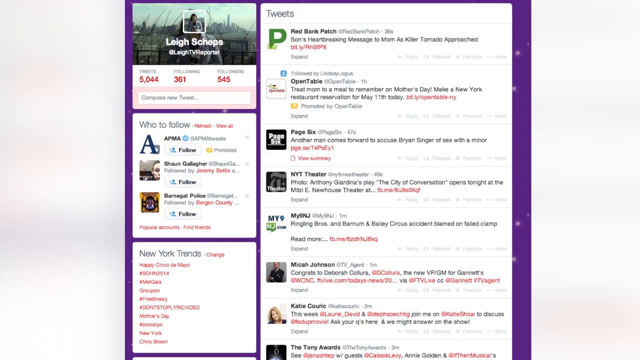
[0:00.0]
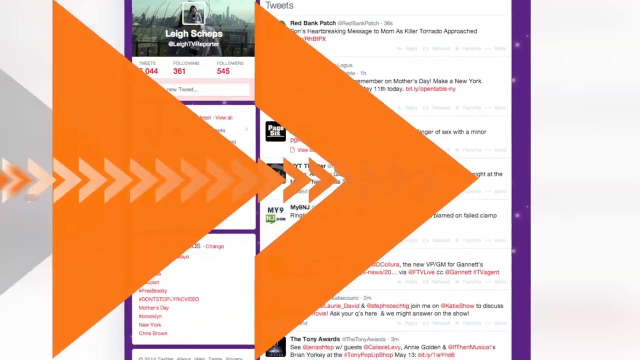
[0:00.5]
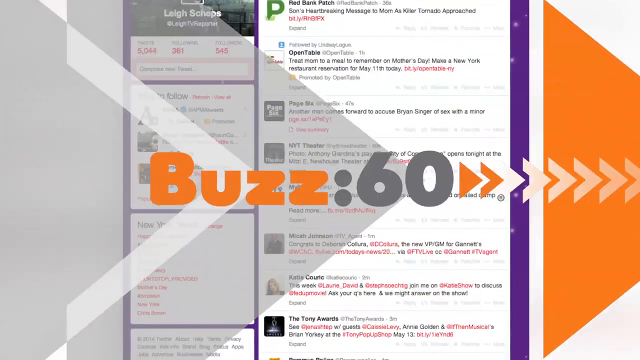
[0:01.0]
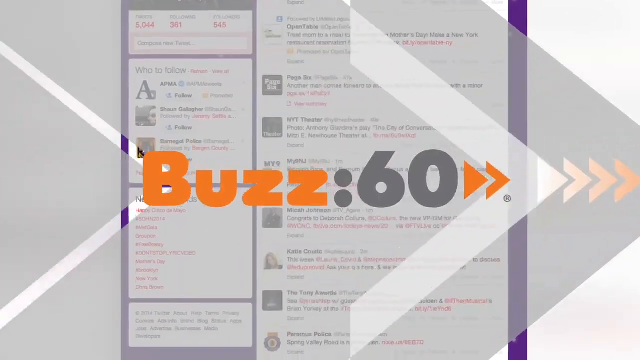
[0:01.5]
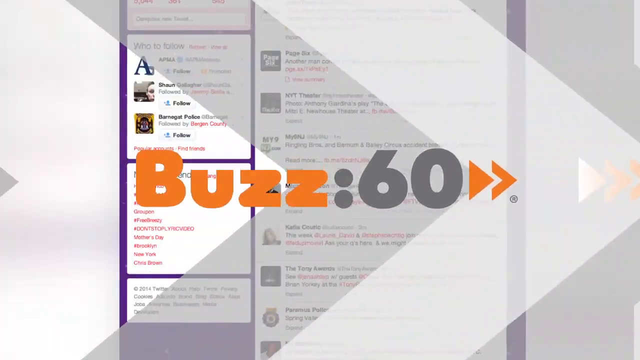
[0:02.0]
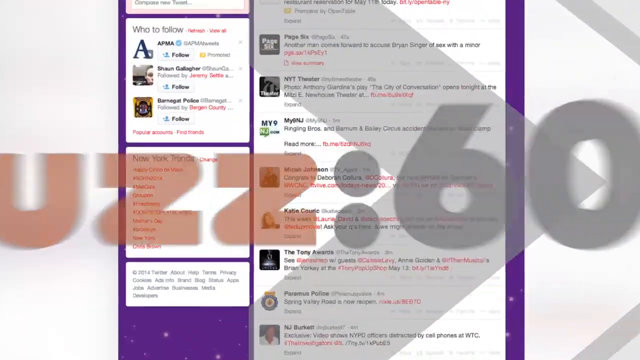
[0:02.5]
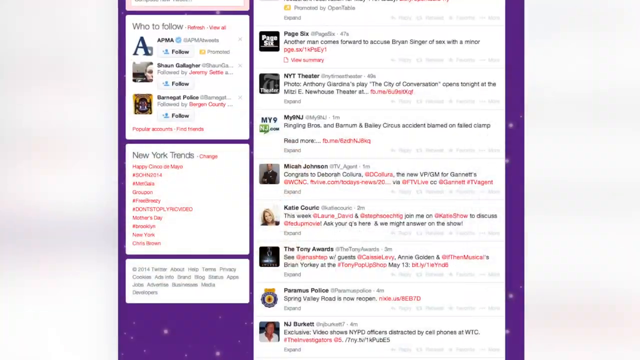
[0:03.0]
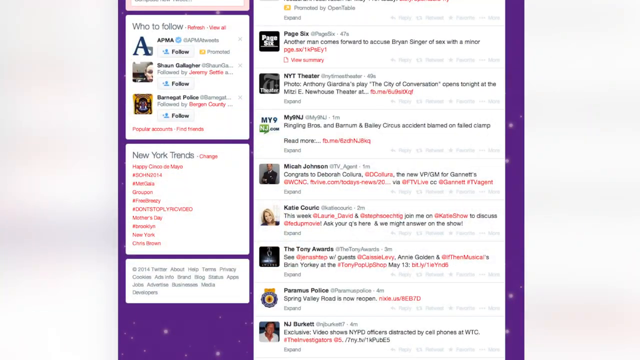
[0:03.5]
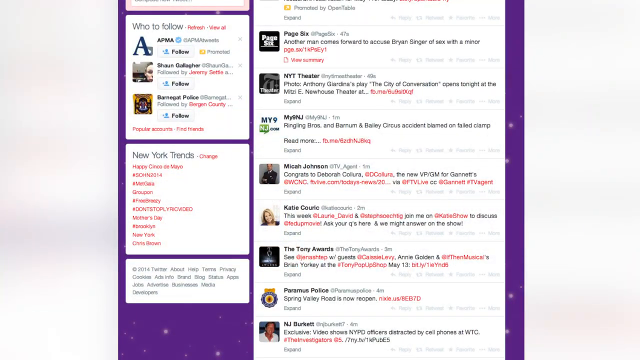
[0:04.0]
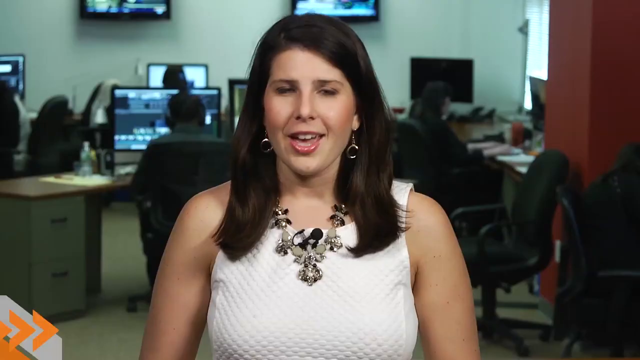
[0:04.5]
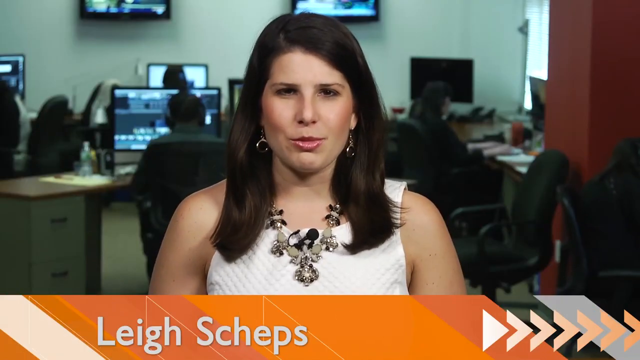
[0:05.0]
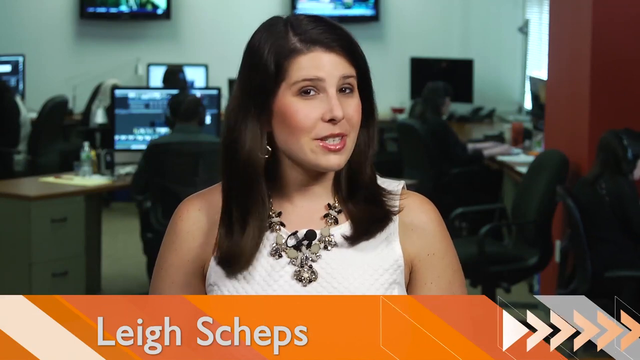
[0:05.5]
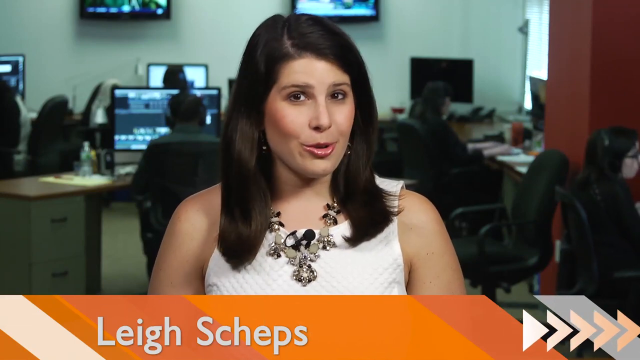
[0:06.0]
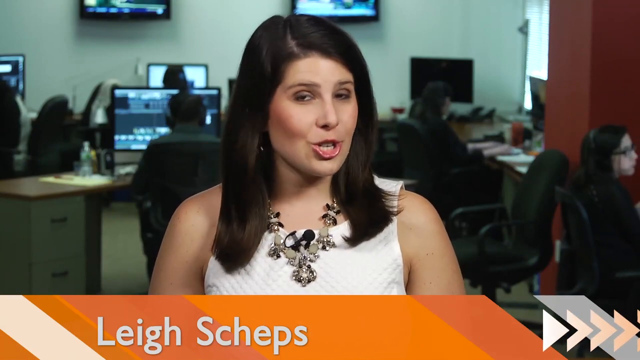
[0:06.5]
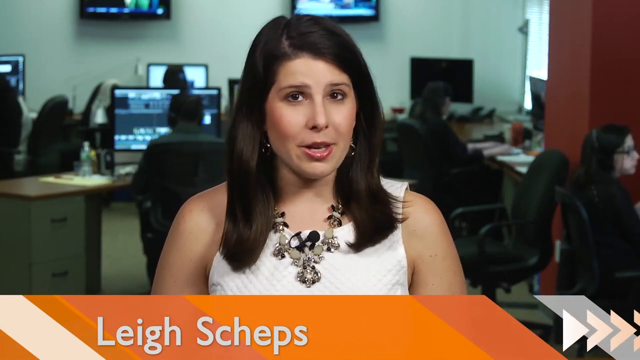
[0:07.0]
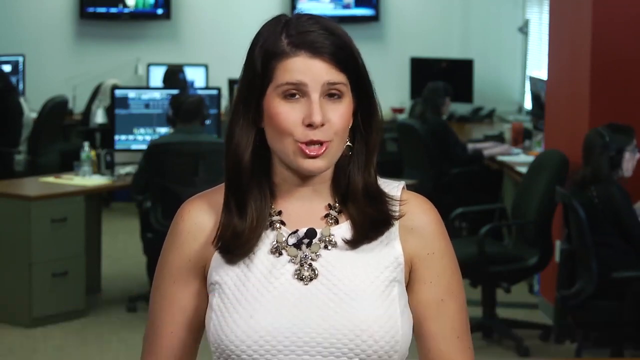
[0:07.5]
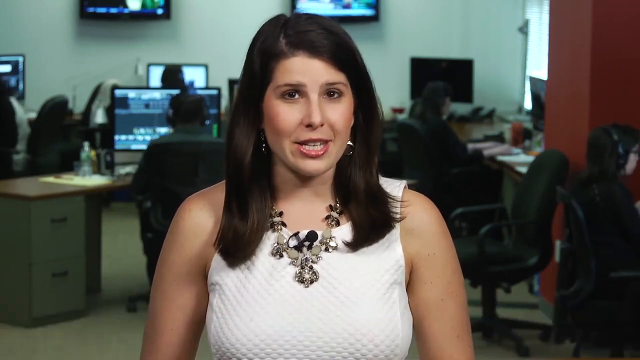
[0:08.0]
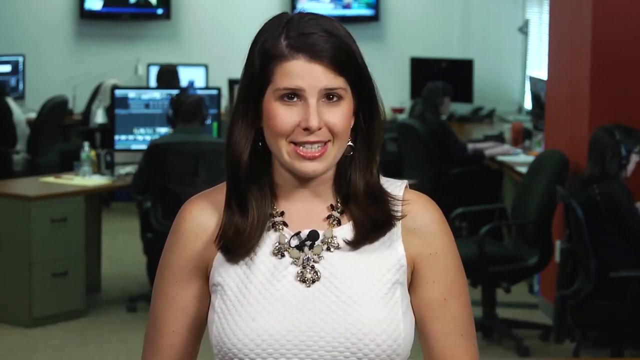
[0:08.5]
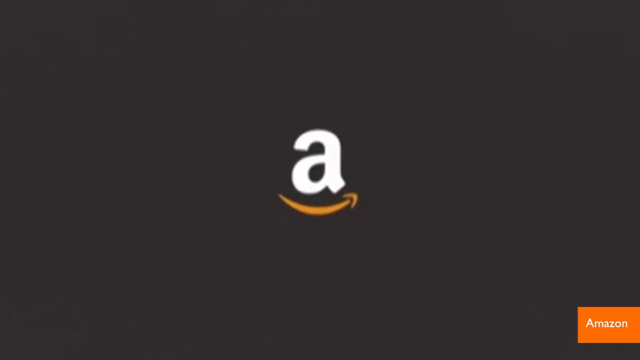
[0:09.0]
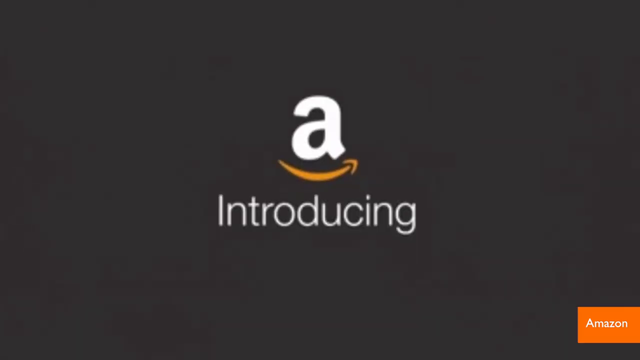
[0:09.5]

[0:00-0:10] The video opens with the words "Buzz 60" over what looks like a Facebook or some other kind of social media background, with "Buzz 60" on top of it. Then Leah Schnapps appears; she seems to be in some kind of newsroom and is speaking. She is a middle-aged woman, probably in her late 20s or early 30s. Text reads "Amazon introducing Amazon cart," and the view moves quickly to an area showing something about Amazon cart.